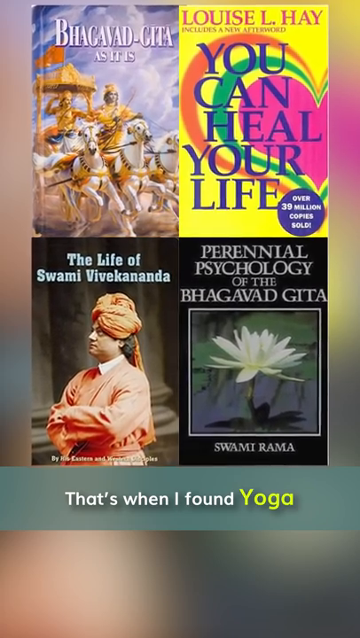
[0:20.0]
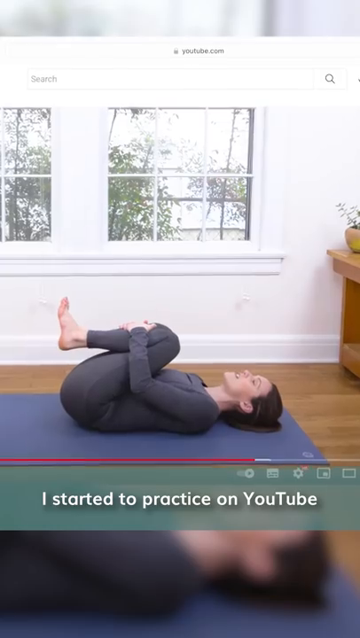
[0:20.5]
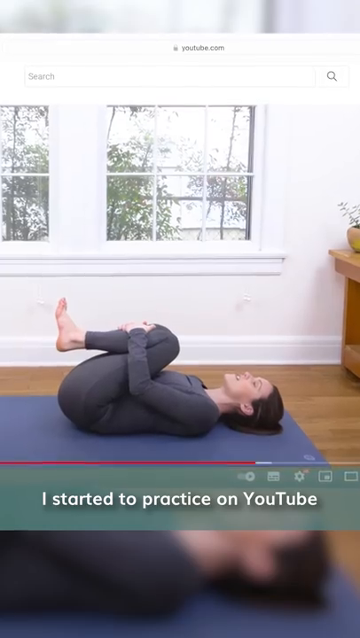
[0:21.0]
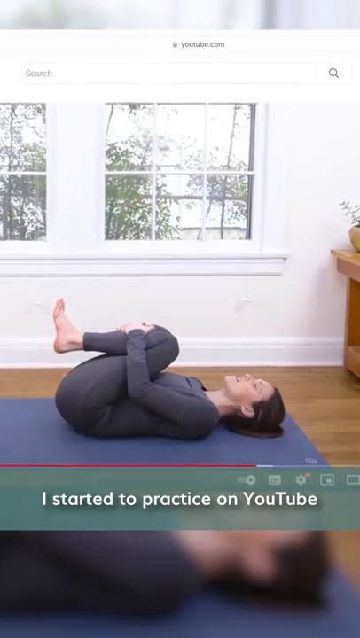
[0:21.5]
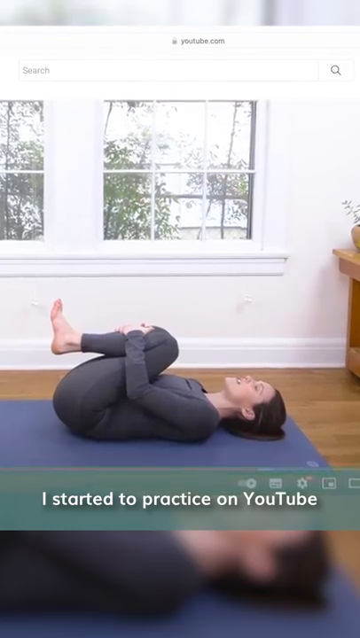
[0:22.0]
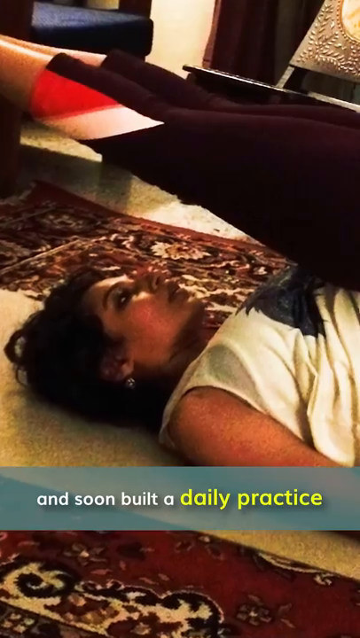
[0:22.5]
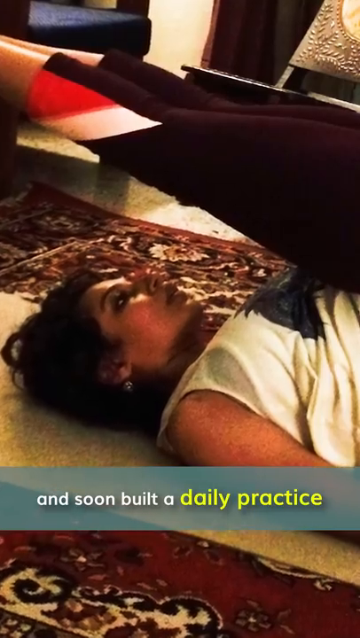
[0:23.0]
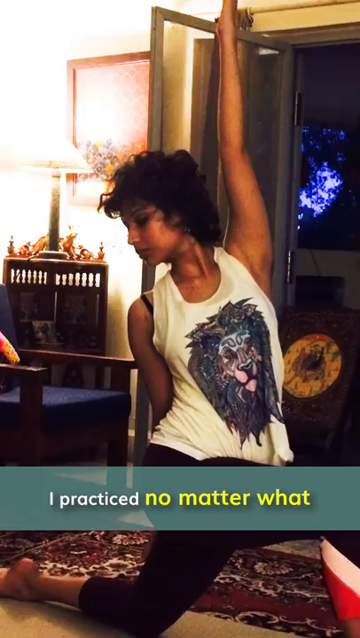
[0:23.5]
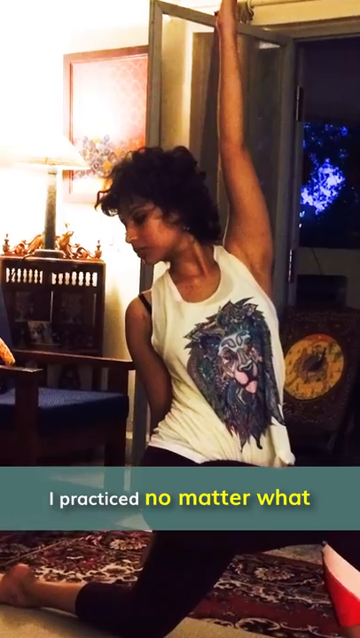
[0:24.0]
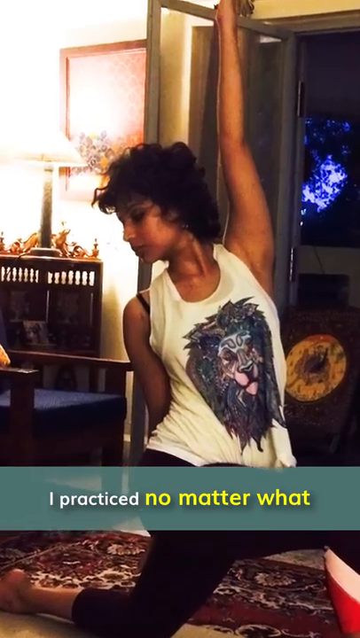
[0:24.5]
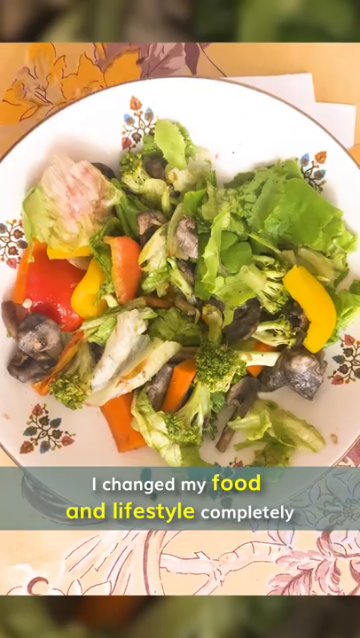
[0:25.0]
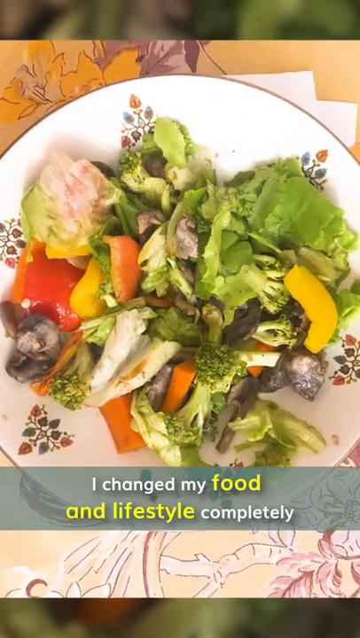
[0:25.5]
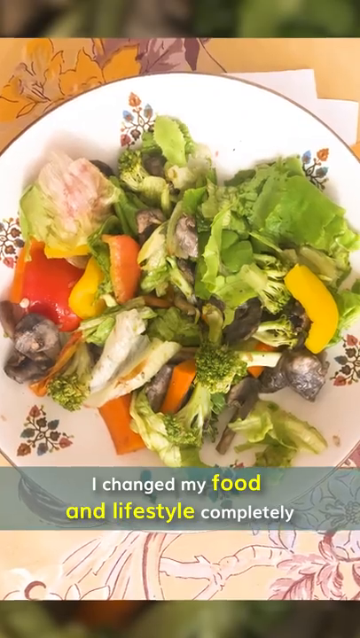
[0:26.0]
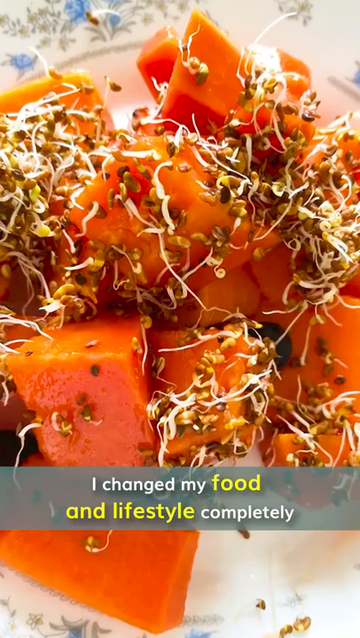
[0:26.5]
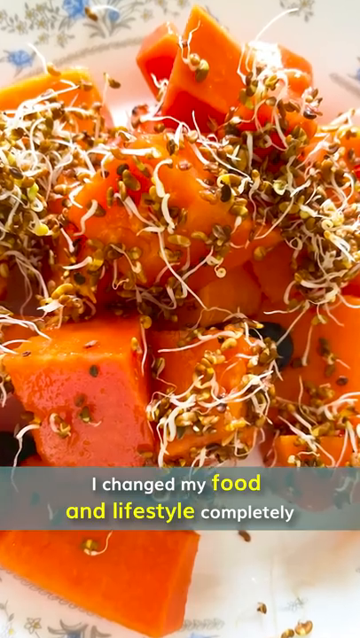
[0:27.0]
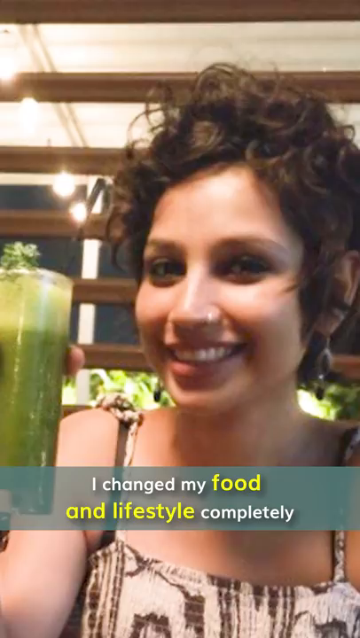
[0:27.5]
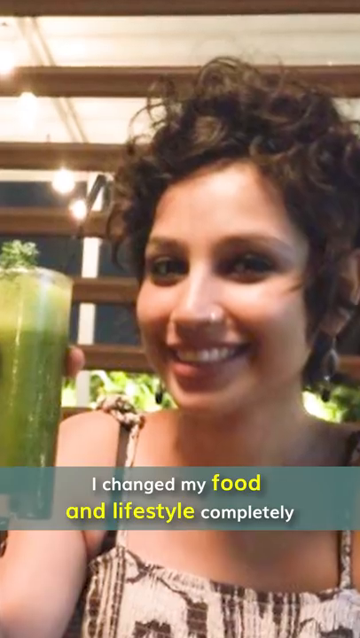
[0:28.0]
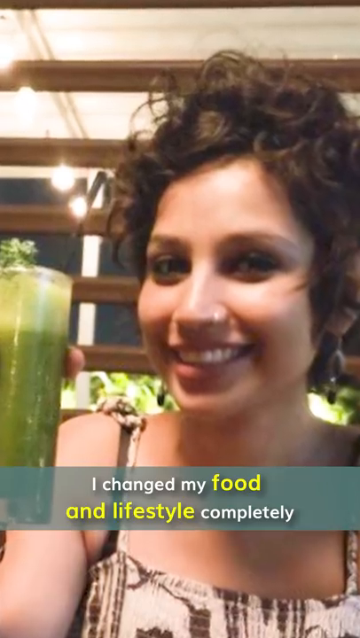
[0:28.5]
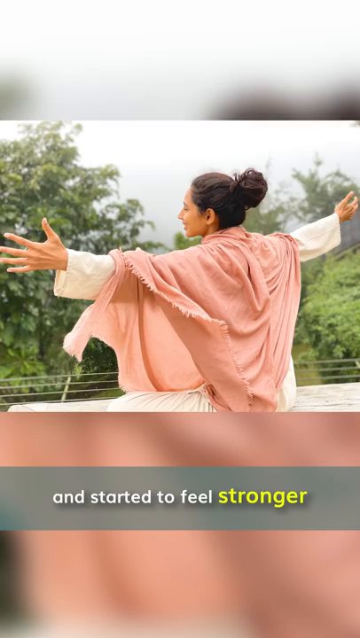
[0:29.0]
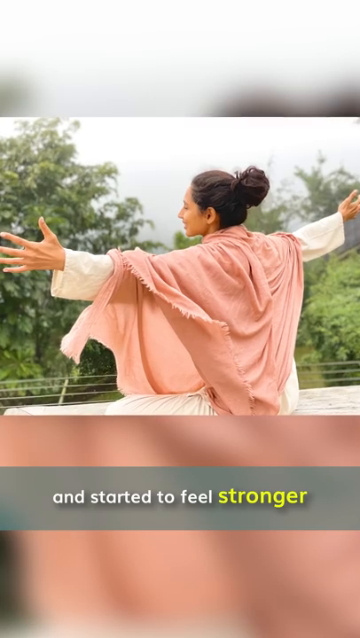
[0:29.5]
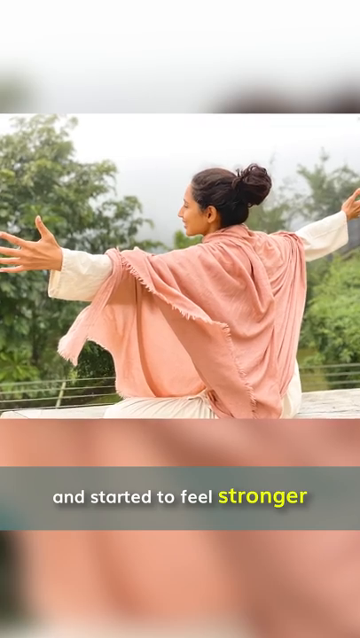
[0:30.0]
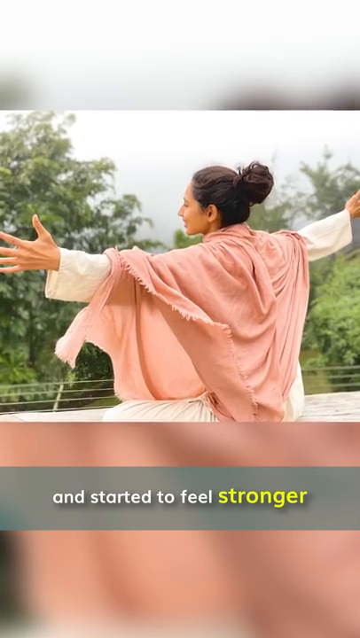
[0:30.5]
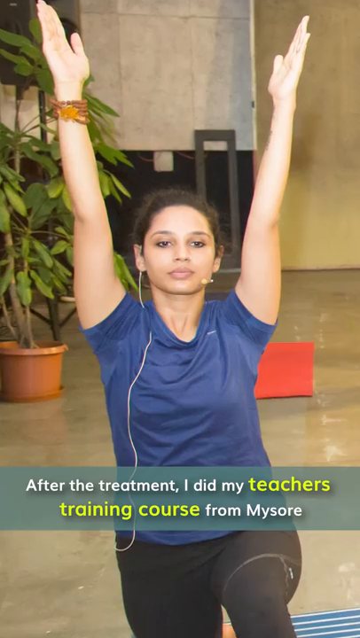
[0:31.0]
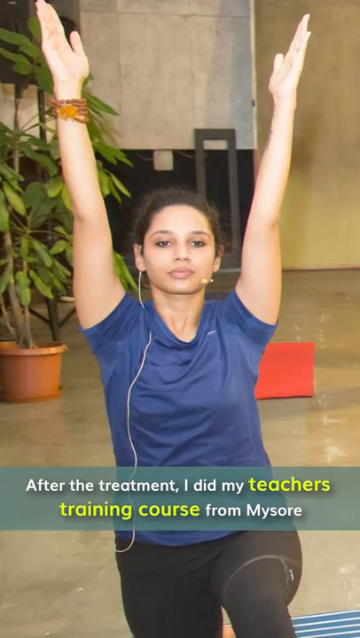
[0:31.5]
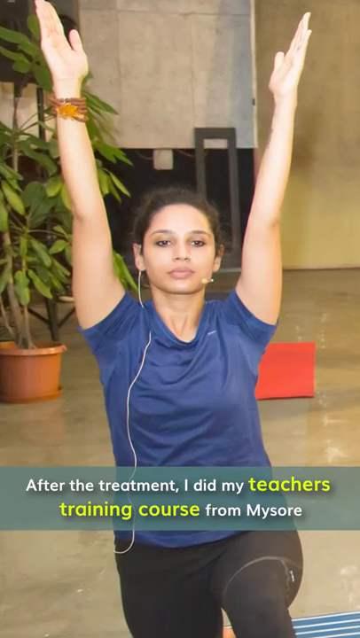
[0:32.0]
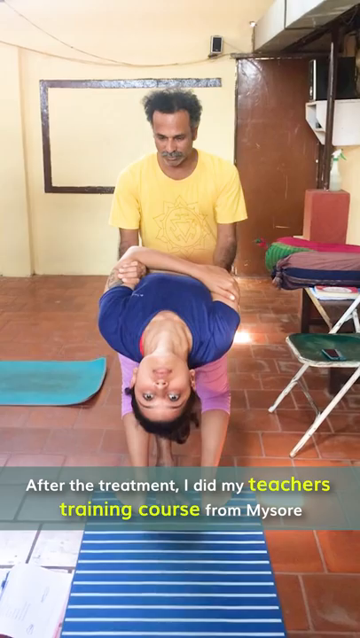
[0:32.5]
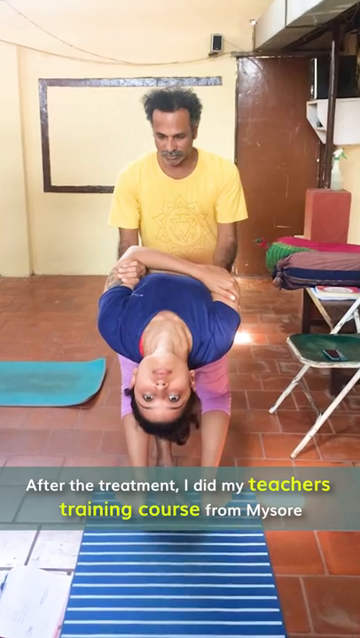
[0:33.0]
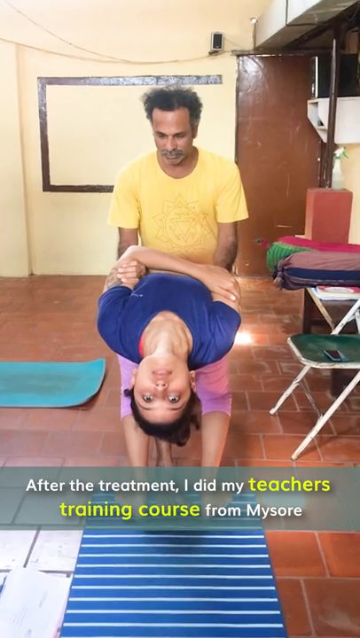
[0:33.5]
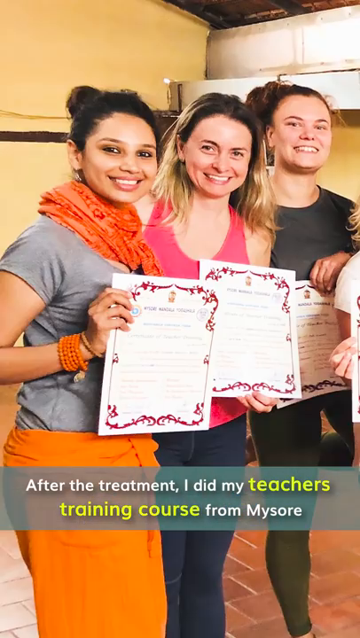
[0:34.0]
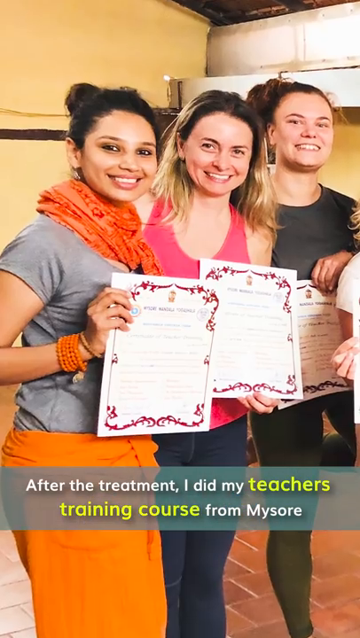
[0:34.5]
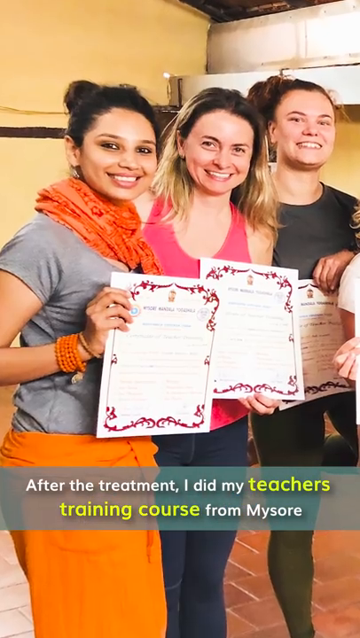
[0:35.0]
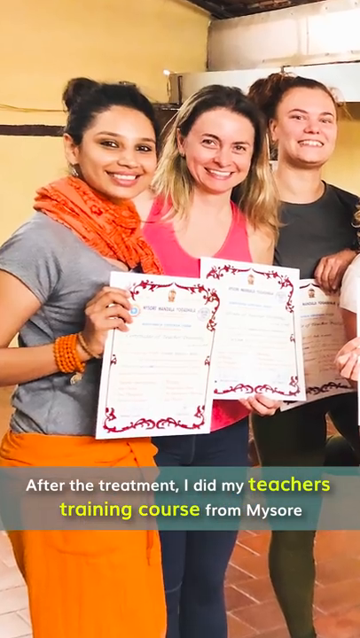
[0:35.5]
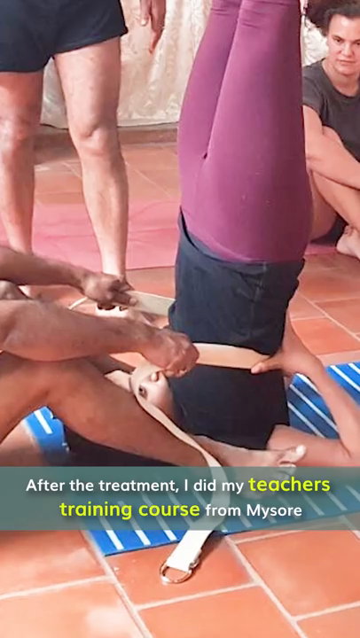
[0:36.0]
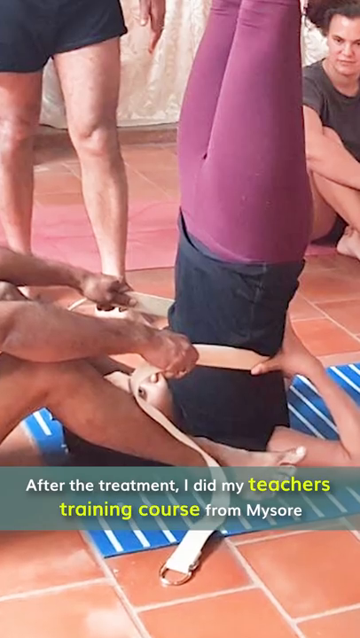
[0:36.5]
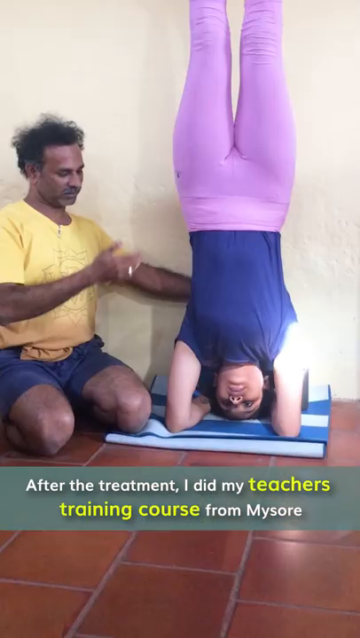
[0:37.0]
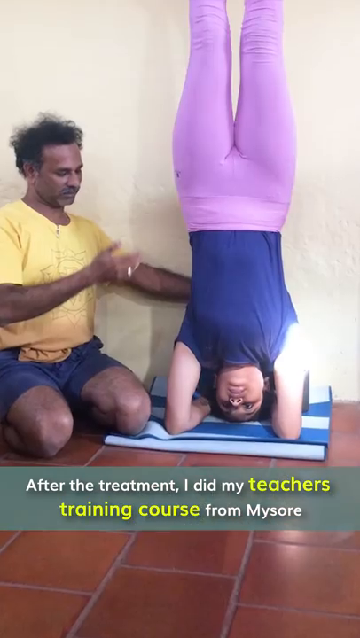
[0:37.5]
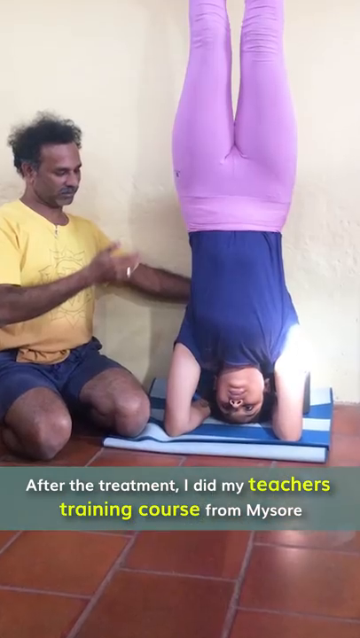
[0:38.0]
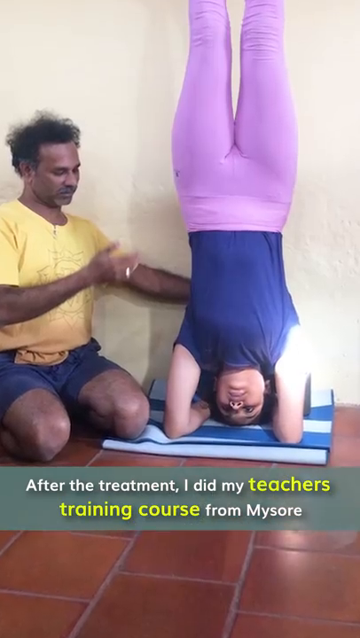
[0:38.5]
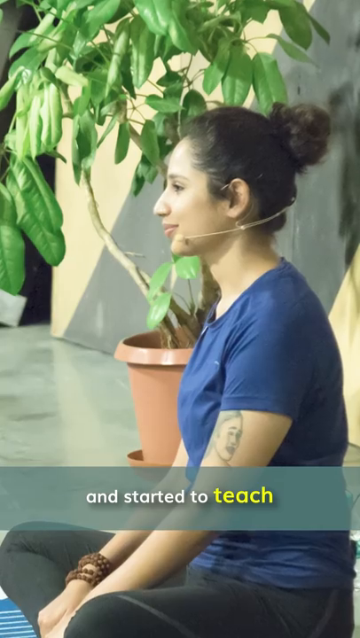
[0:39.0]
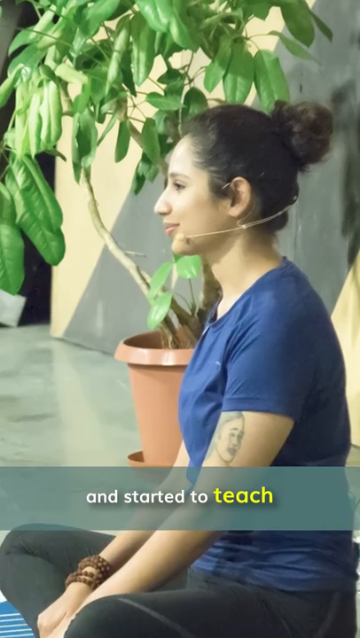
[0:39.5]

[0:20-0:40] A young woman with ear-length hair drinks green smoothies, does yoga moves, and holds a certificate with other people. She does handstands and headstands and sits in a yoga position, moving through different yoga poses; some people help her in some of them, and she wears a headset in others. Pictures of healthy vegetable meals appear, along with what may be green smoothies she is drinking. Text states that she started practicing yoga on YouTube daily, no matter what, that she changed her food and her lifestyle completely and started to feel stronger, and that after treatment she did a teacher's training course and started to teach yoga.